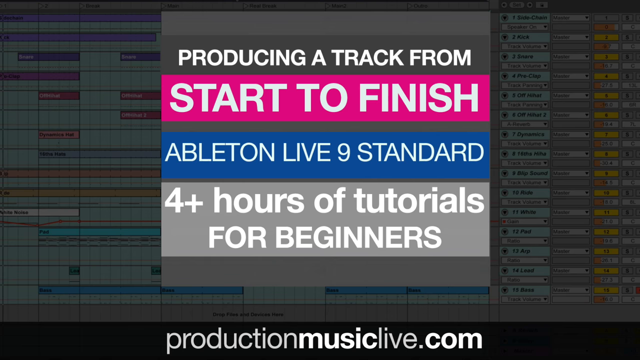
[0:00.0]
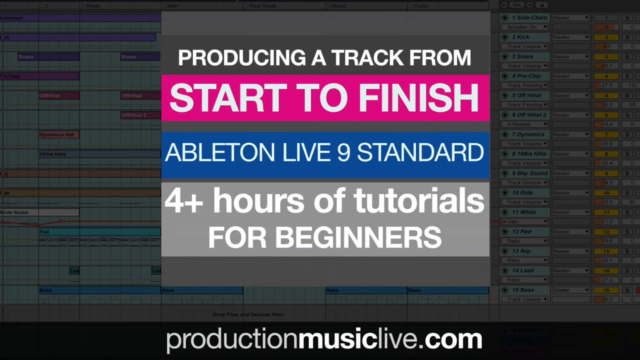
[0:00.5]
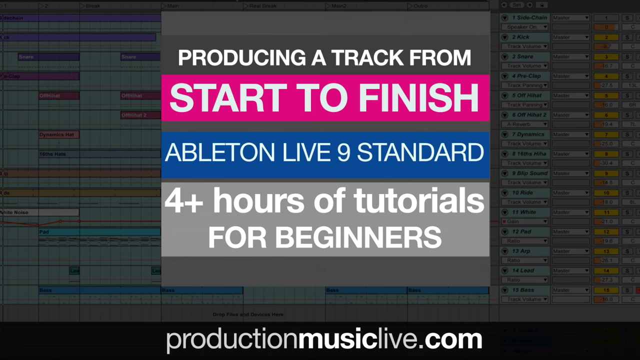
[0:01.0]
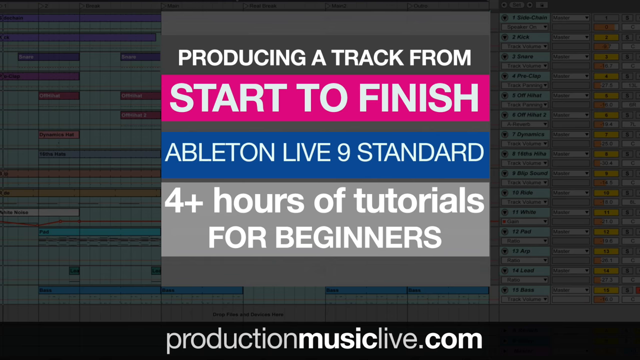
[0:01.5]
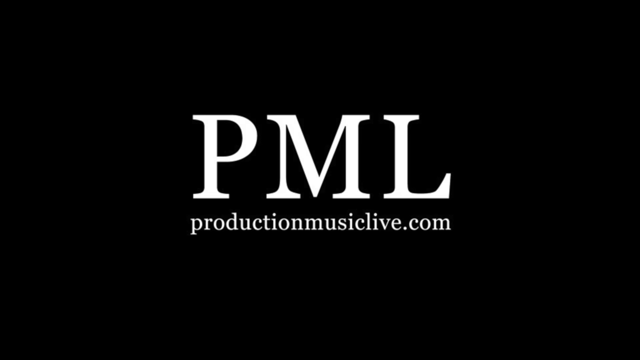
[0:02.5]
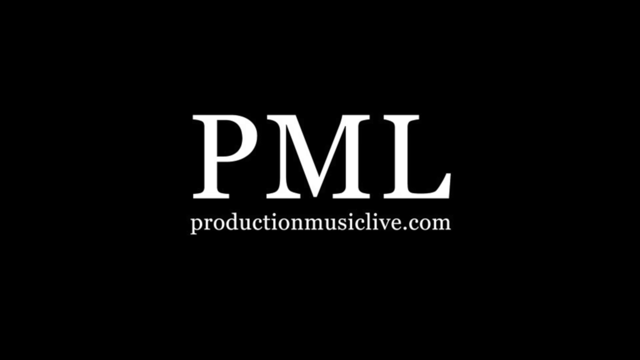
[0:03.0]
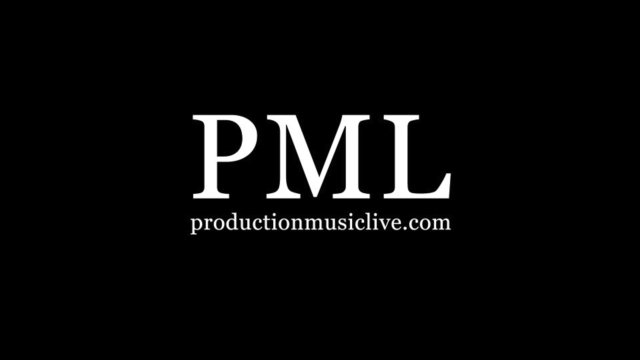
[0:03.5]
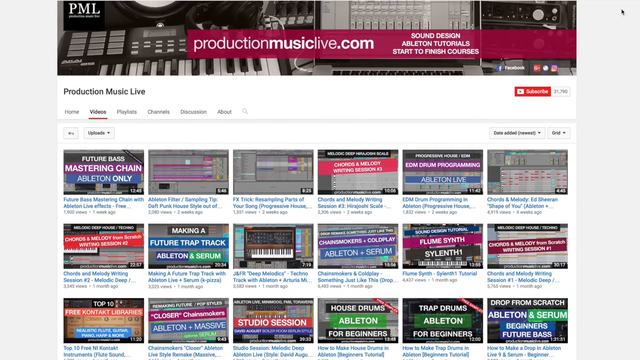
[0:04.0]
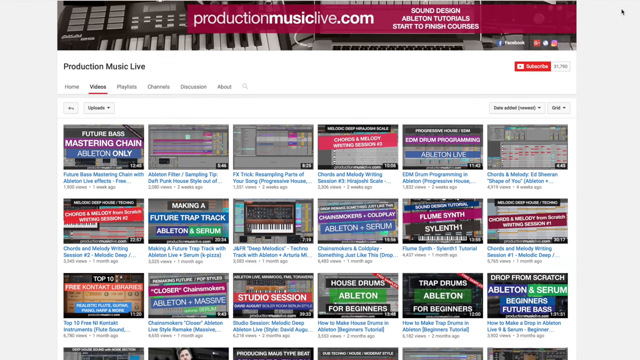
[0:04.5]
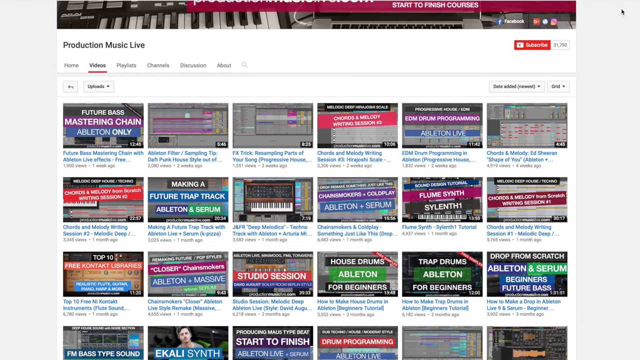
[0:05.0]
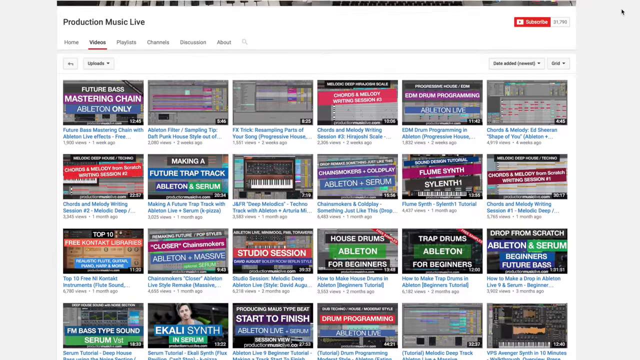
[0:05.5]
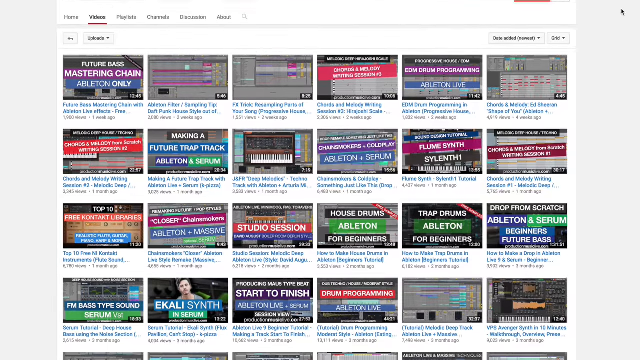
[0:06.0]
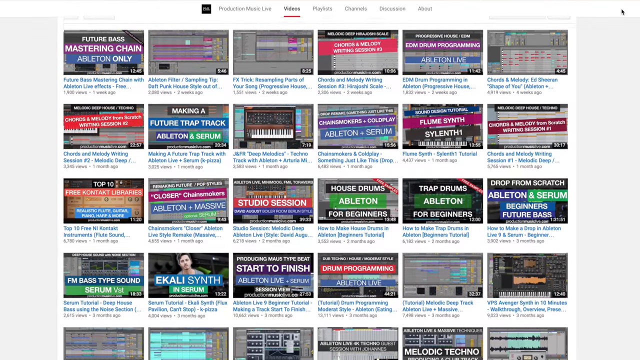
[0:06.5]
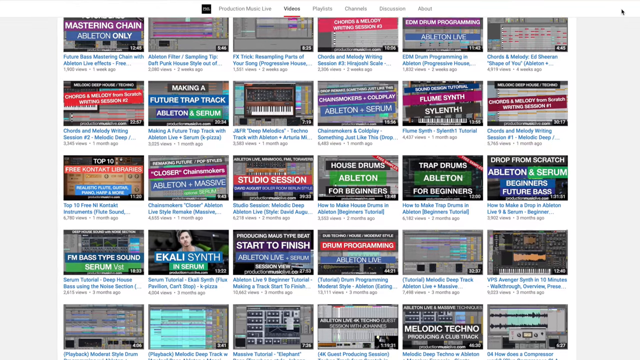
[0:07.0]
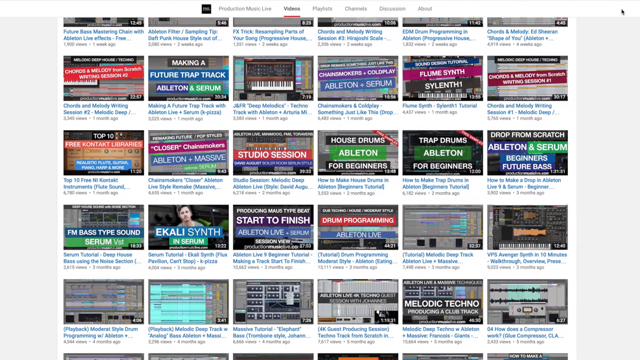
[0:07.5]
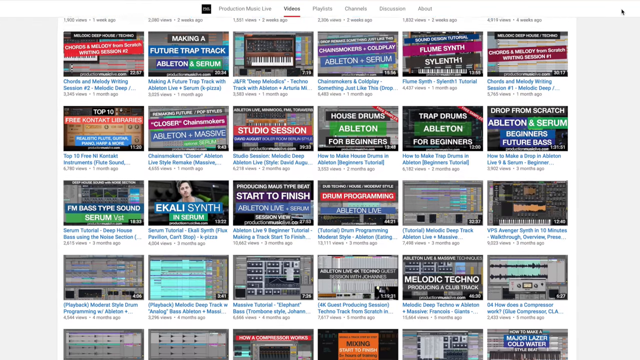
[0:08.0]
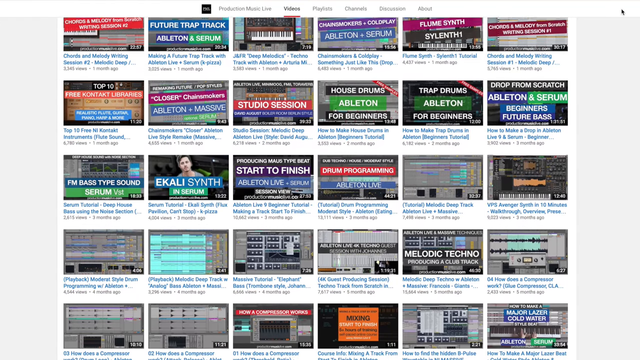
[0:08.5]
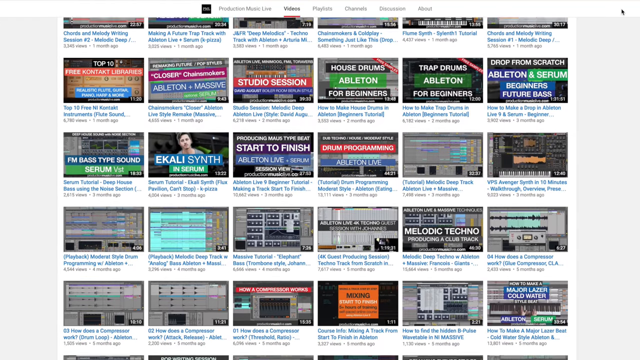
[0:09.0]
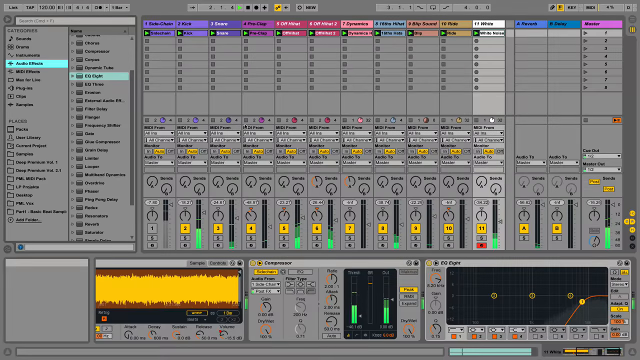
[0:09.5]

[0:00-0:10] The video opens with a title that reads "Producing a track from start to finish. Ableton Live 9 Standard, 4 plus hours of tutorials for beginners." "PML Production Music Live" comes after that. A long list of tutorials follows as the viewer scrolls down, showing 24 videos and more that a viewer can click on to learn how to produce a track from start to finish. For a few seconds, a still image briefly flashes on screen showing what appears to be the interface of a music application.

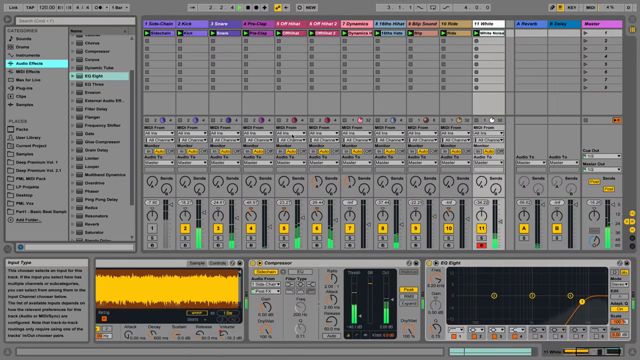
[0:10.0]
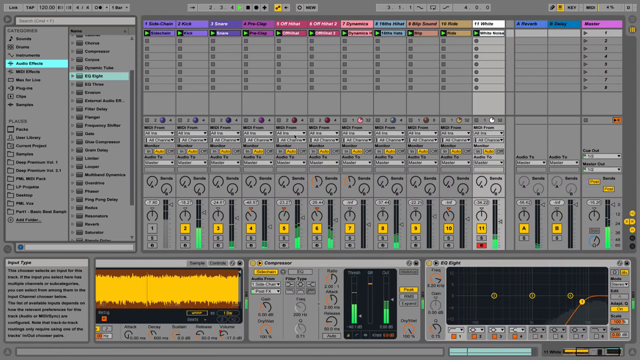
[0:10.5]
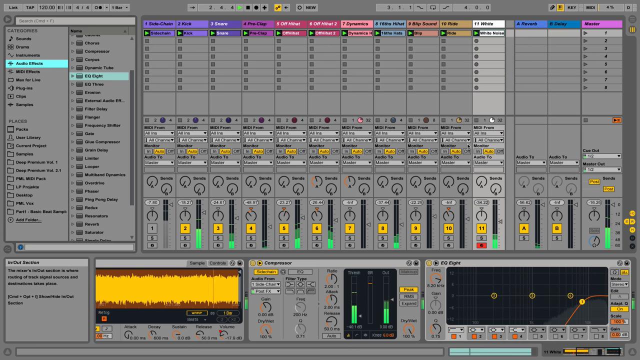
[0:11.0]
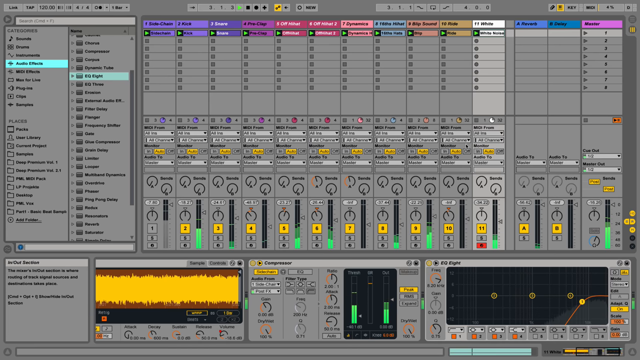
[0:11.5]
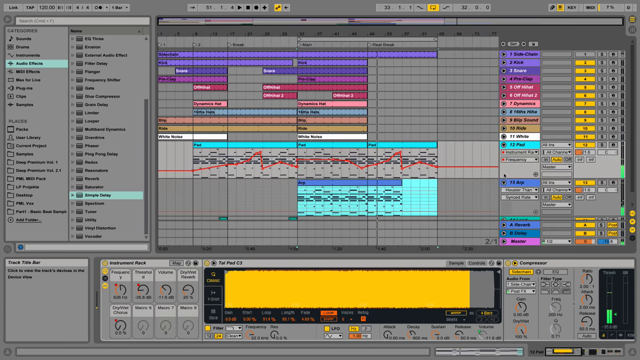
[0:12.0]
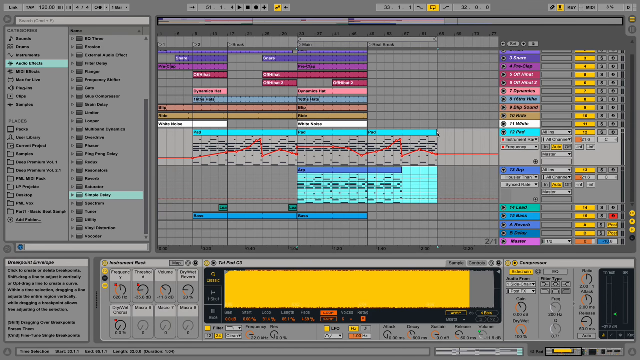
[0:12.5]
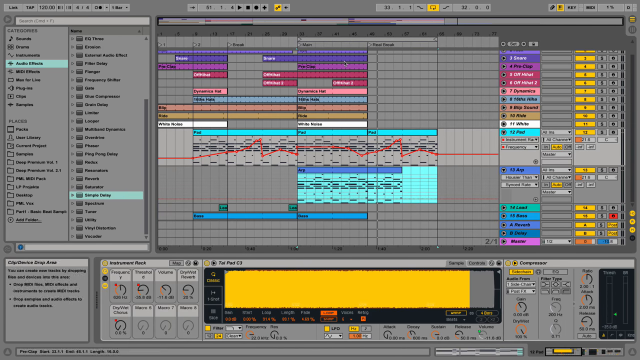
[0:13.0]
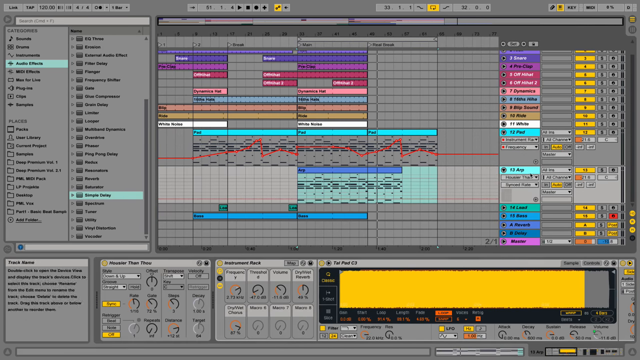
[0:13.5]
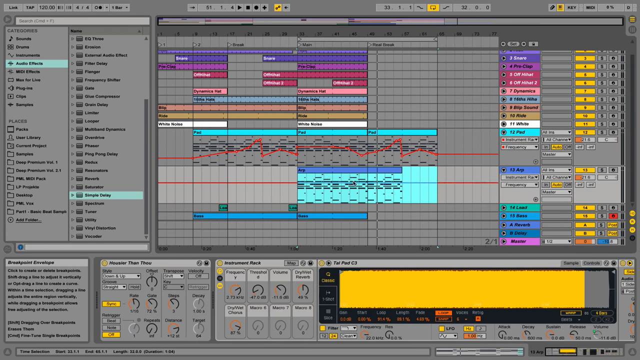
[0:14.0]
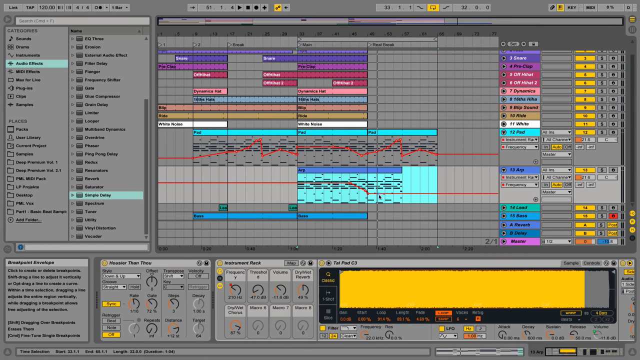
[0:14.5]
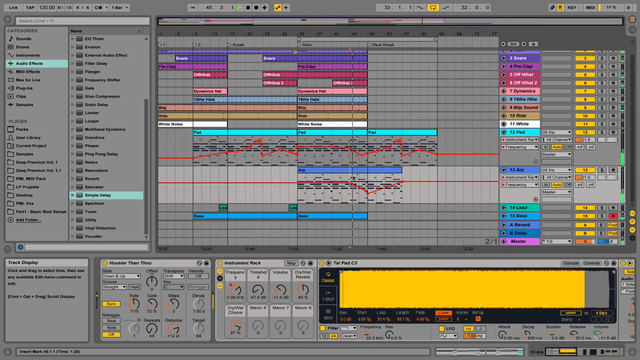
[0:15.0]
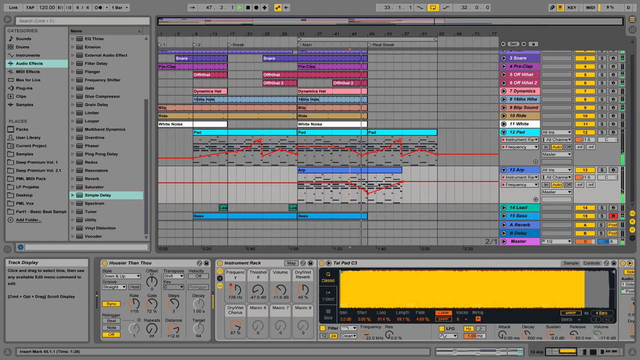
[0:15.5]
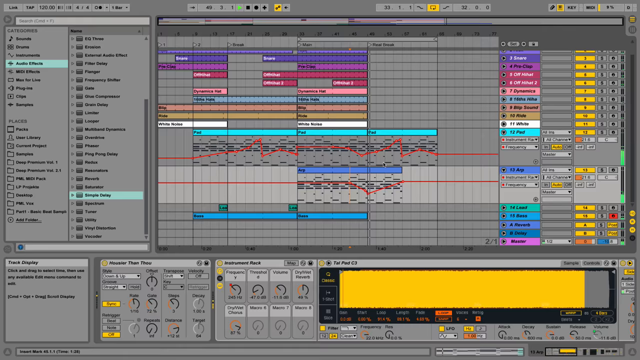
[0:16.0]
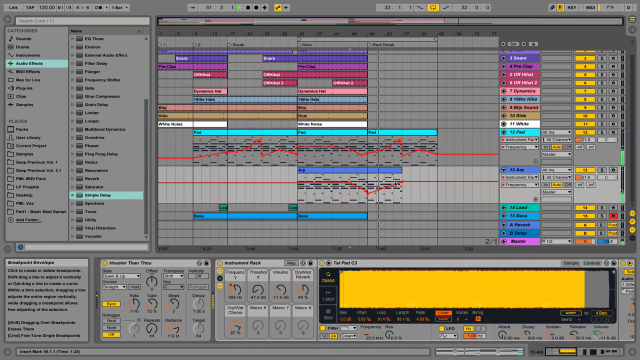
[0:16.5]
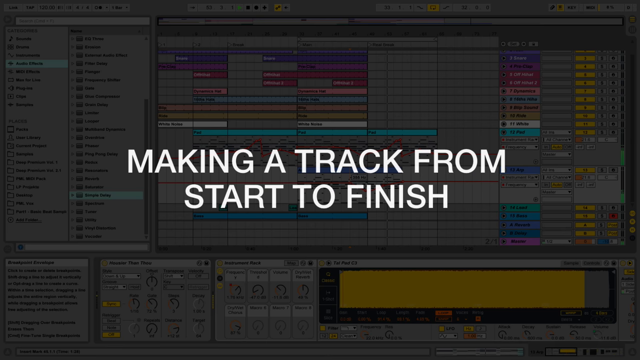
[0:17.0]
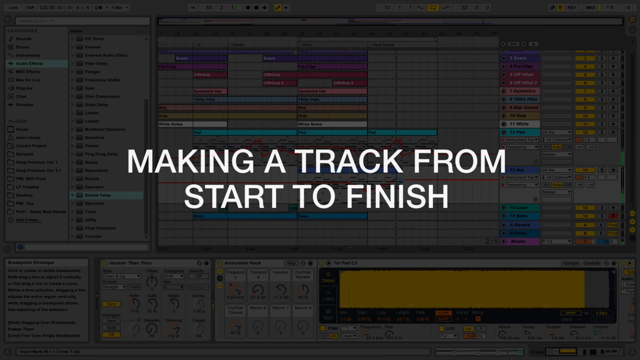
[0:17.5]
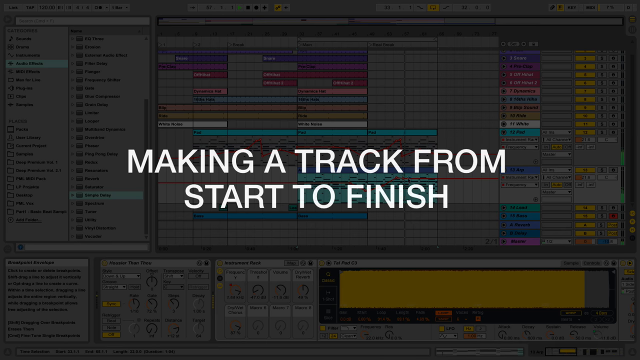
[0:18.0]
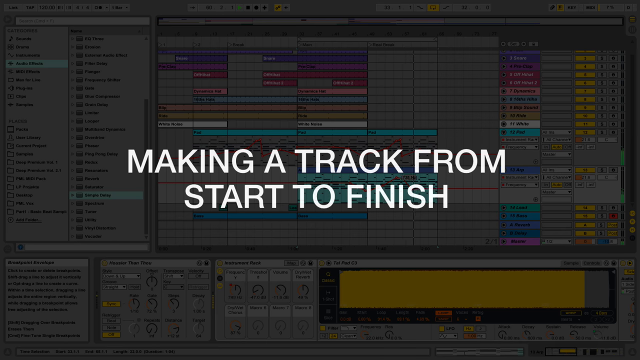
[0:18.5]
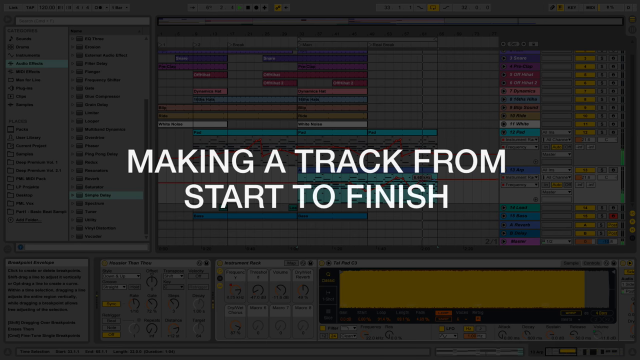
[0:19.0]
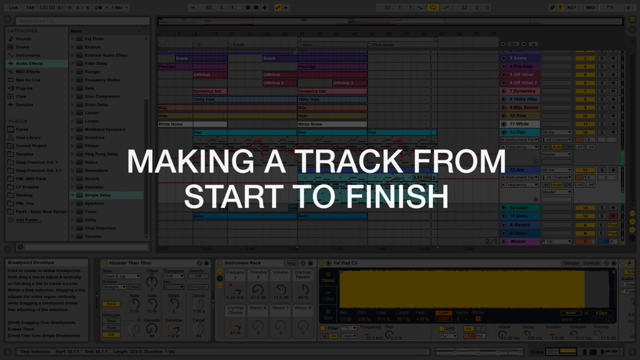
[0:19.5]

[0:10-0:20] The interface of a music application is shown. It looks fairly complex, with files shown on the far left-hand side and tracks layered horizontally. There are about 14 of these bars, with musical buttons and numbers underneath them. On the bottom left there appears to be a bar for controlling the volume and sound of the music file being played. More of the interface is then shown in detail, particularly the horizontal bars on the right-hand side, which look like a very complex part of the interface to work with.